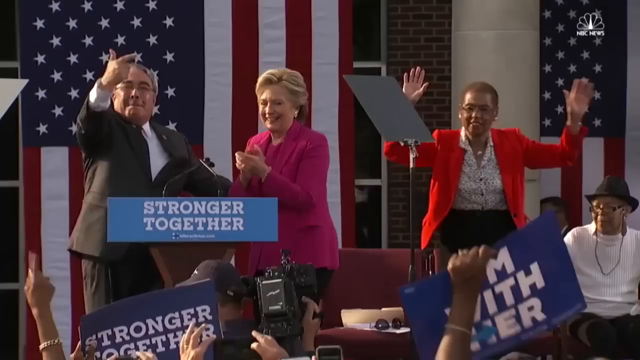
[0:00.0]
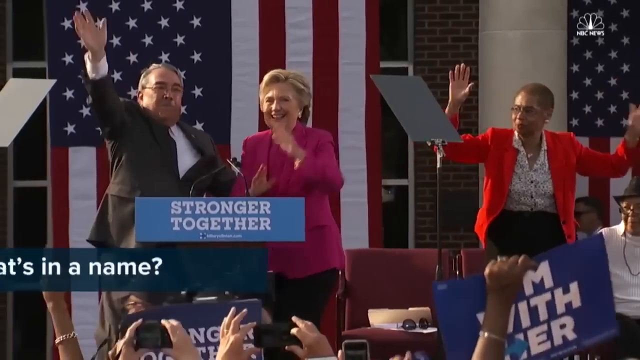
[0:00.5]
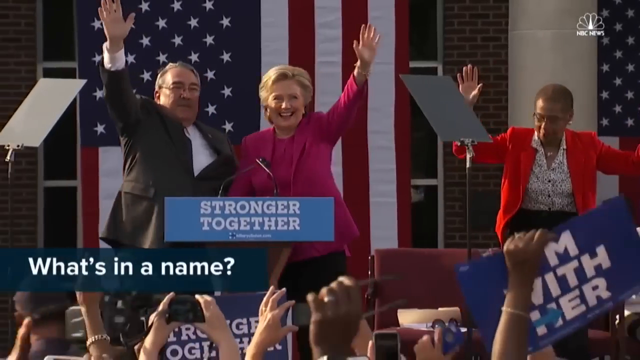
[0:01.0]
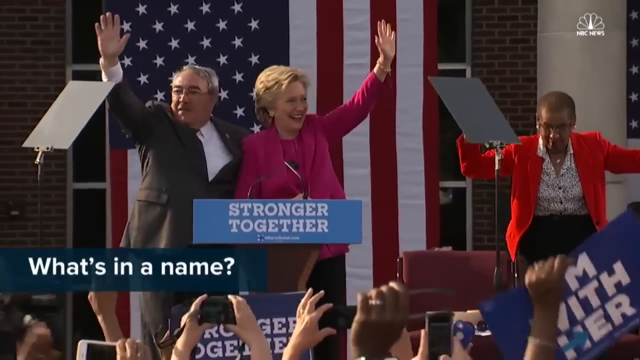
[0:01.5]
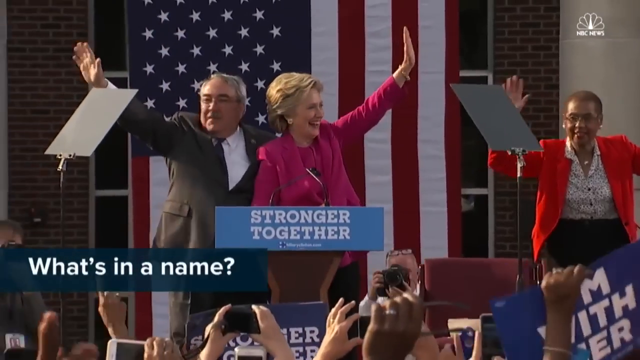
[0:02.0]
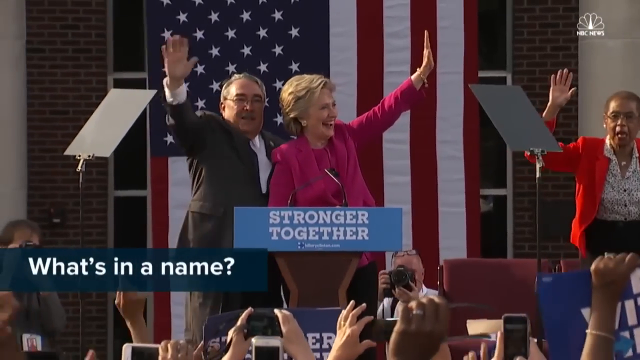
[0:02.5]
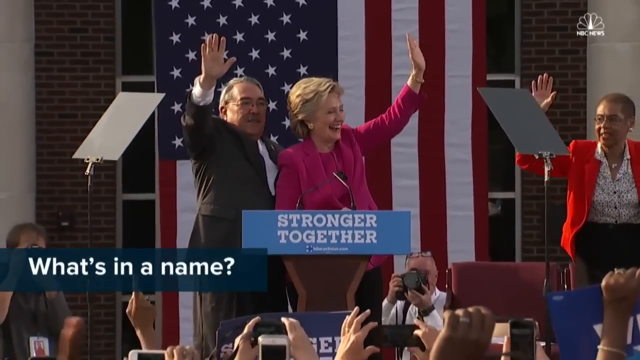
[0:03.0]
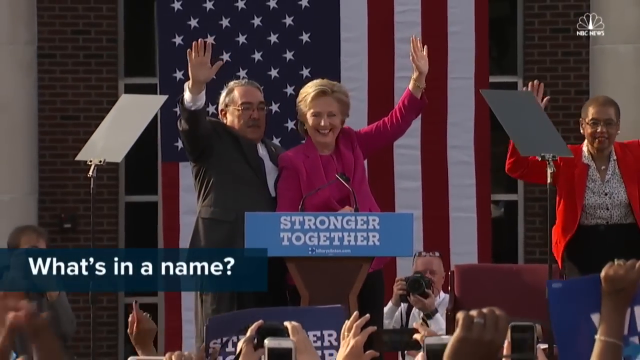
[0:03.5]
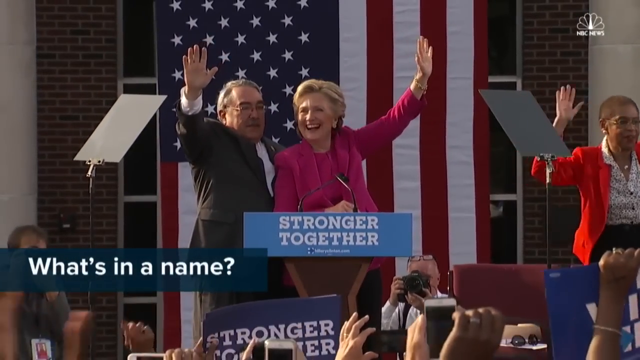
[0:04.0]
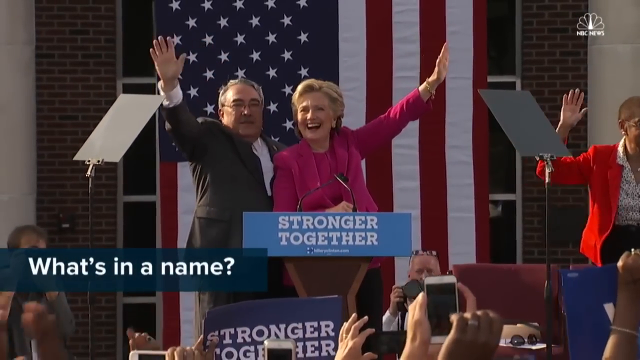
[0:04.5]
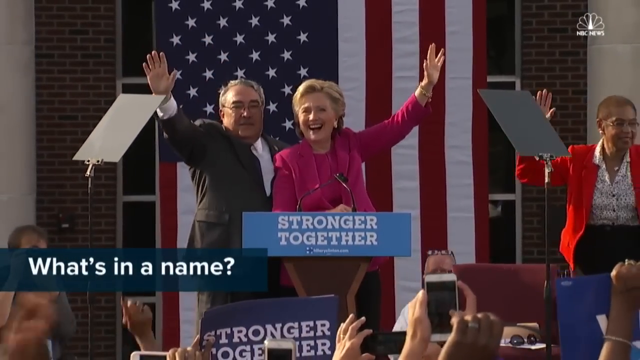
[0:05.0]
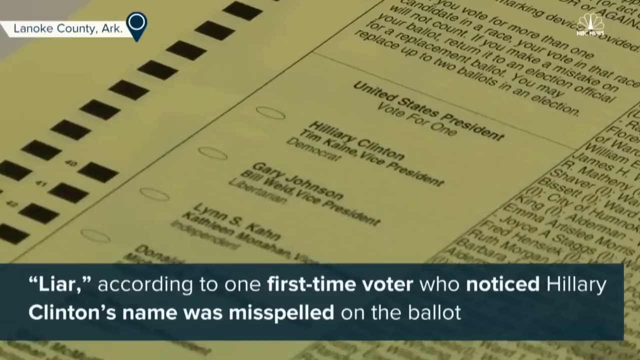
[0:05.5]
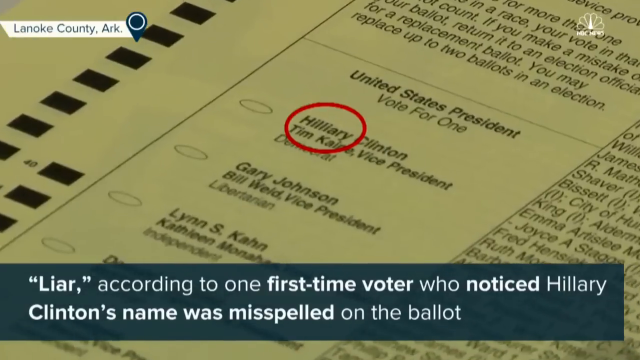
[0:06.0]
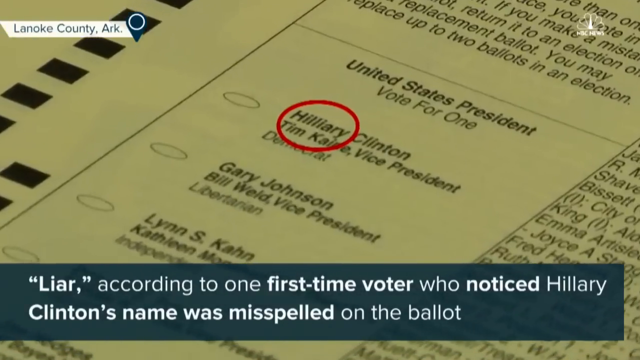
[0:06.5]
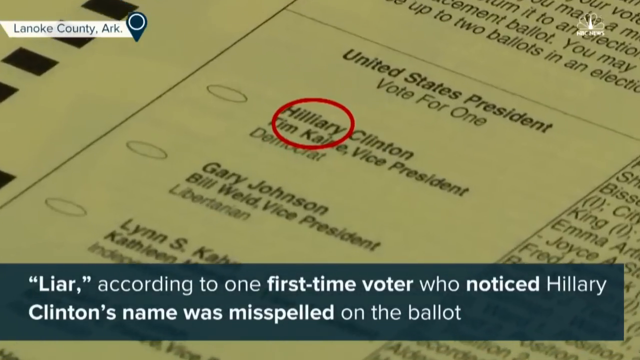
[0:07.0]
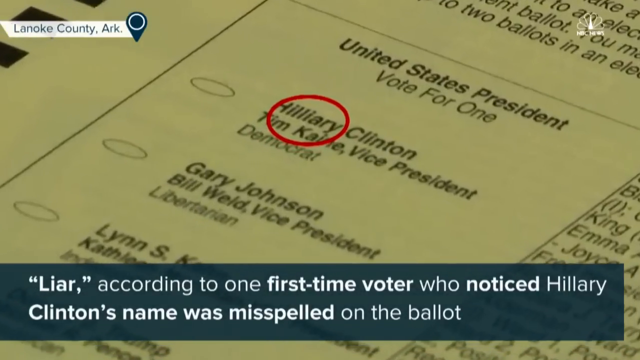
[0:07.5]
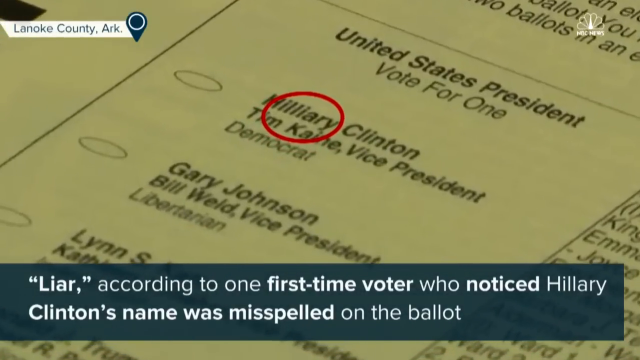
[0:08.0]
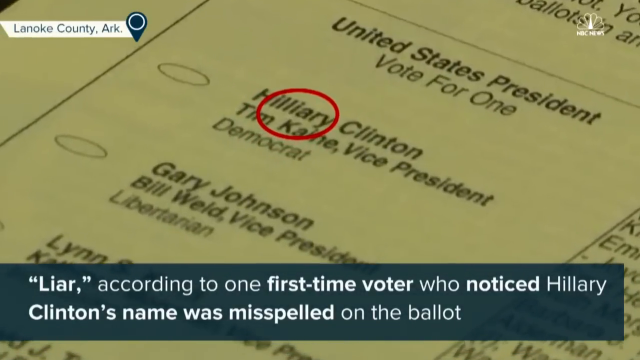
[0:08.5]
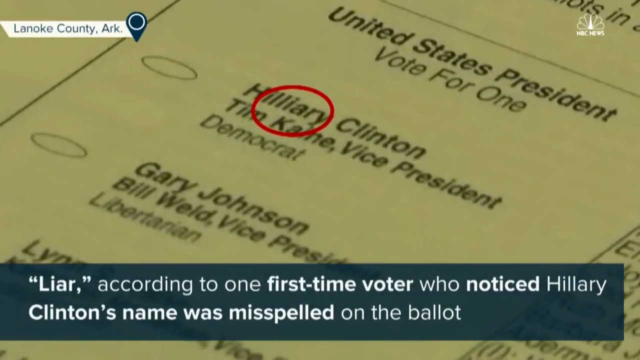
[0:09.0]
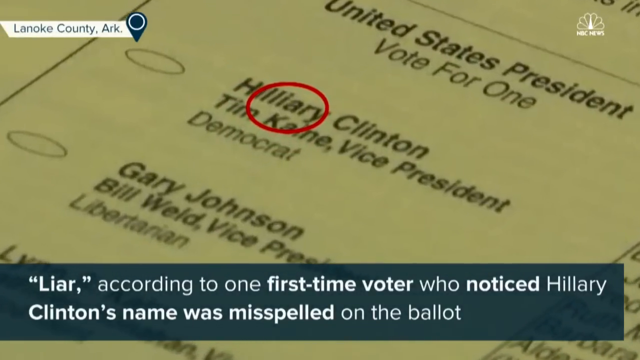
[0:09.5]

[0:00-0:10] A political rally for Hillary Clinton is underway. A white man in a black suit and white shirt is on a stage, and to his right is Hillary Clinton in a pink jacket. They are standing at a podium with a banner on it that says "Stronger Together." To the right of them, a Black woman in a red jacket and white shirt waves both hands in the air. The man gesticulates with his hand and waves, while Clinton claps her hands together. It appears to be a rally from when she ran for president.